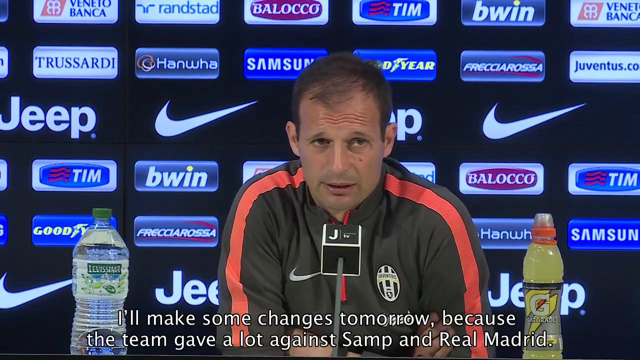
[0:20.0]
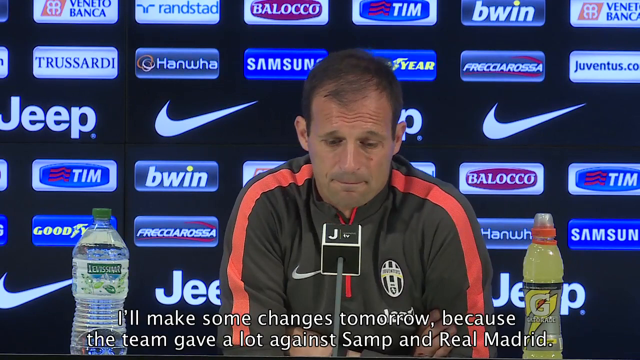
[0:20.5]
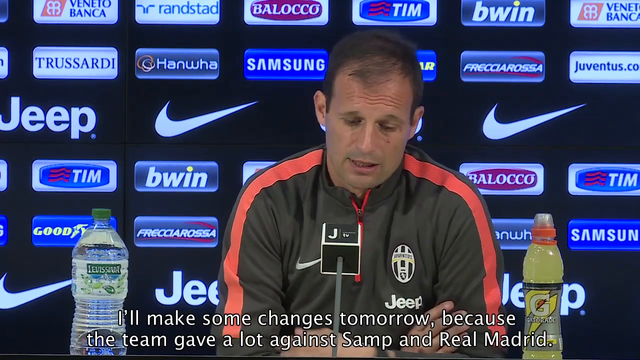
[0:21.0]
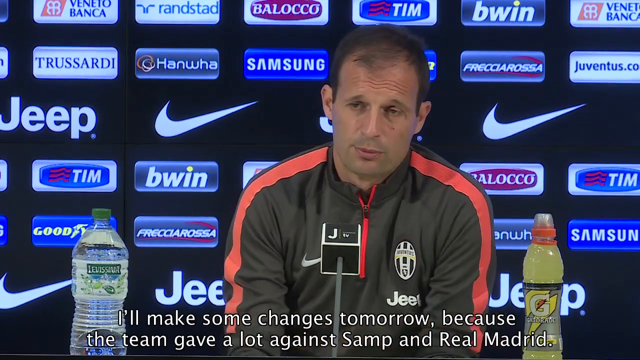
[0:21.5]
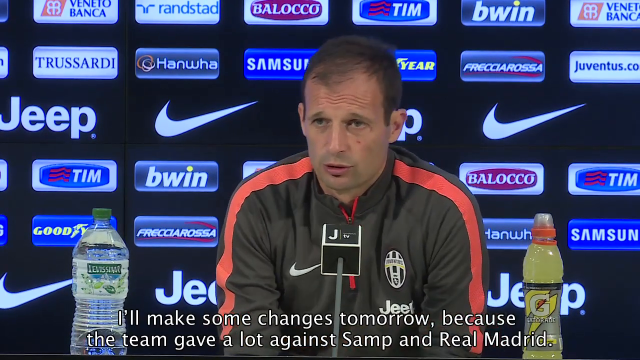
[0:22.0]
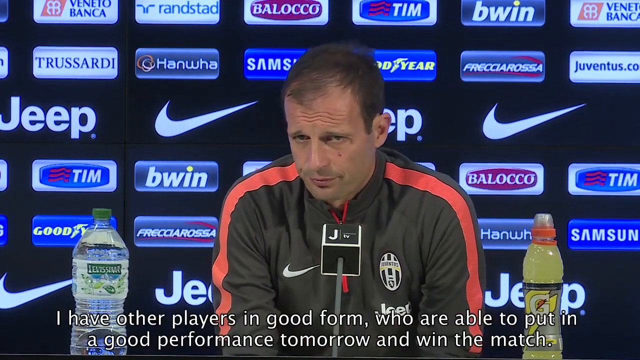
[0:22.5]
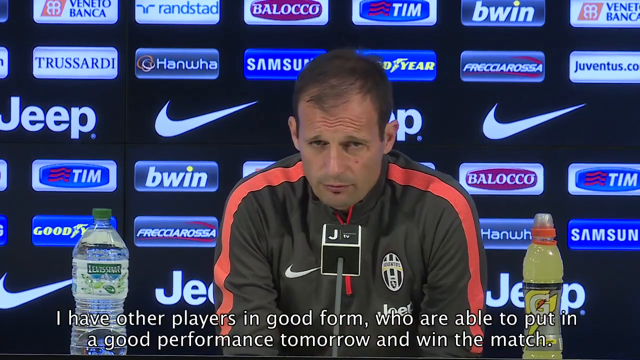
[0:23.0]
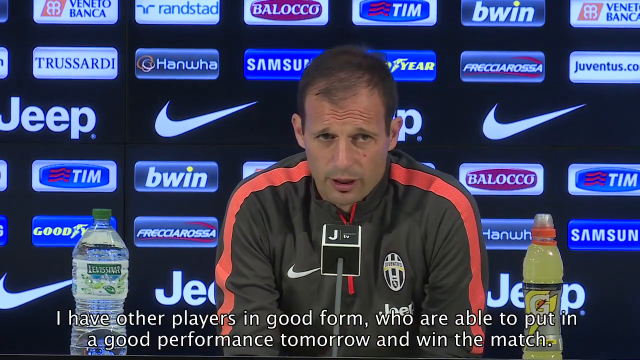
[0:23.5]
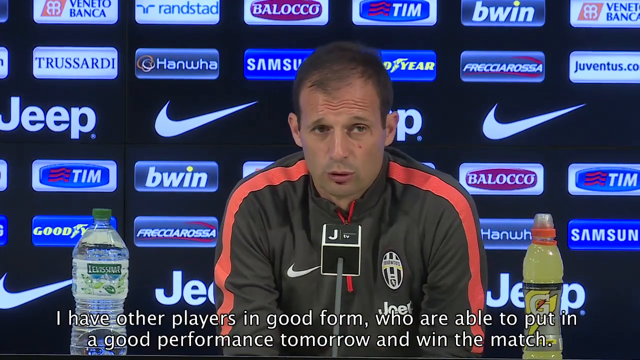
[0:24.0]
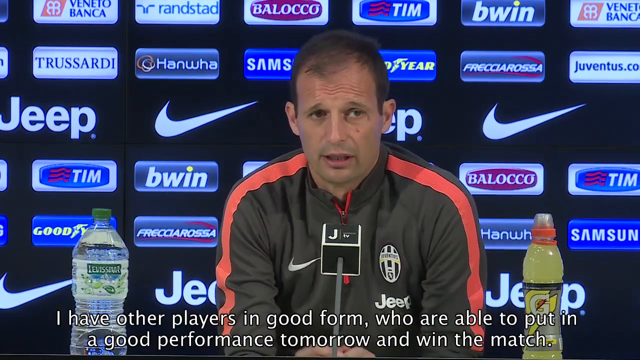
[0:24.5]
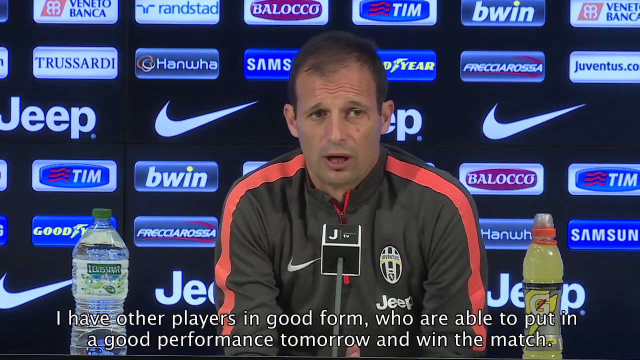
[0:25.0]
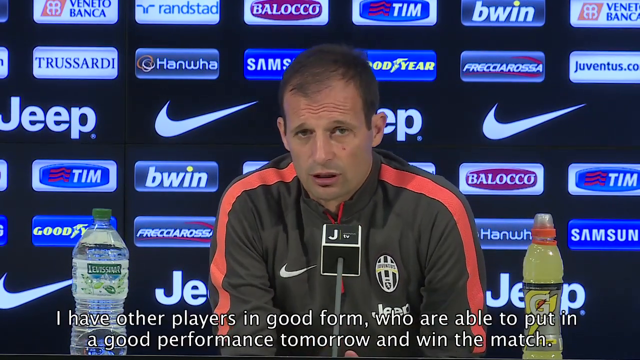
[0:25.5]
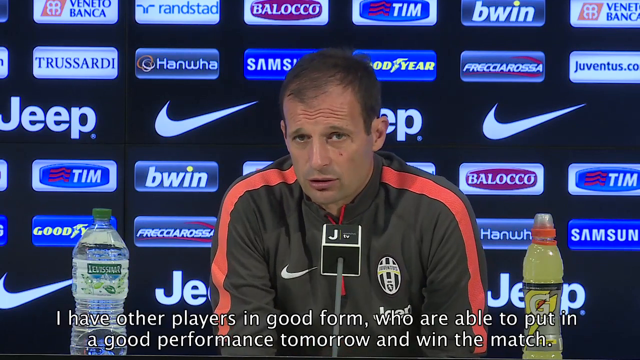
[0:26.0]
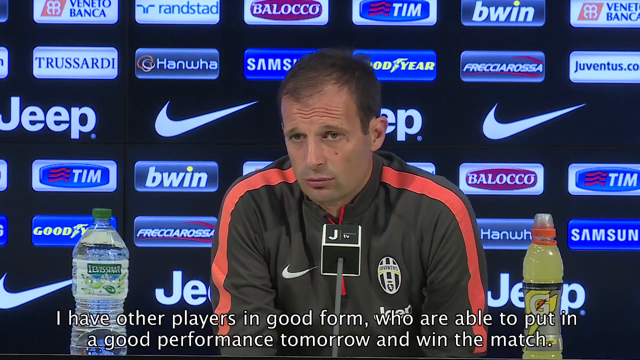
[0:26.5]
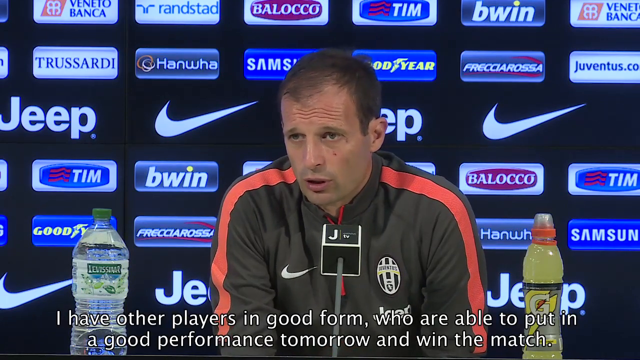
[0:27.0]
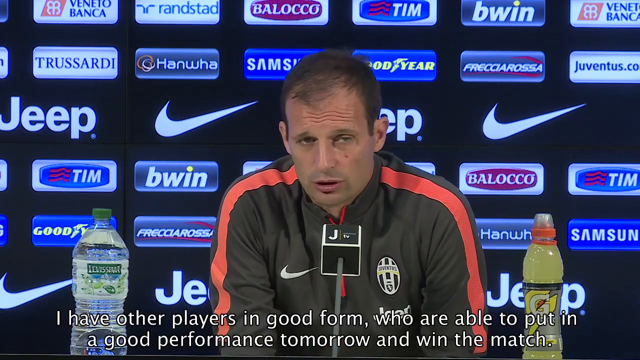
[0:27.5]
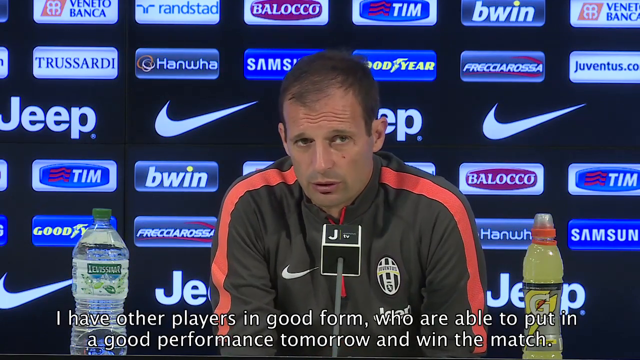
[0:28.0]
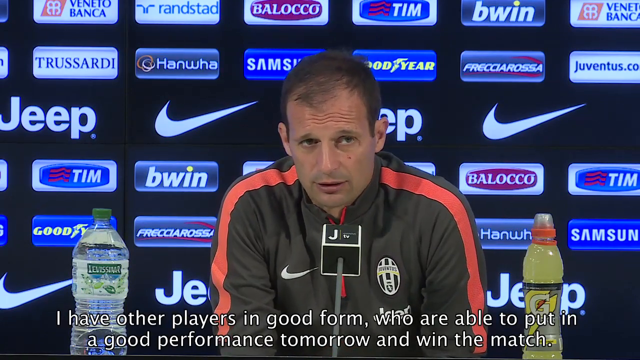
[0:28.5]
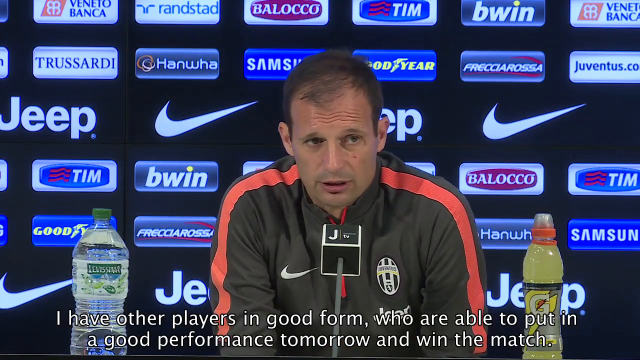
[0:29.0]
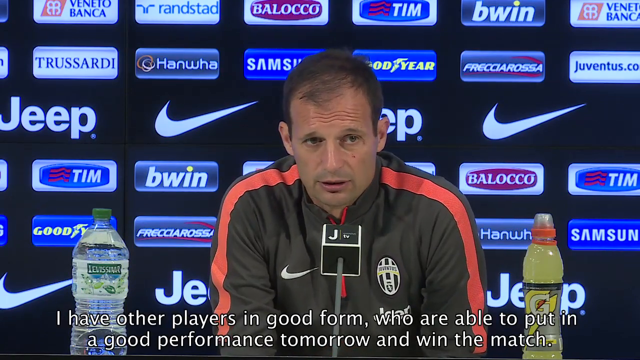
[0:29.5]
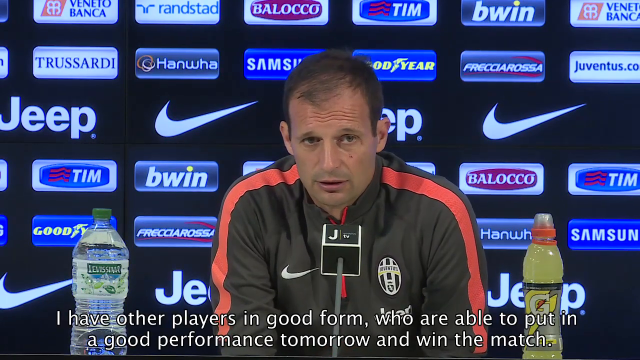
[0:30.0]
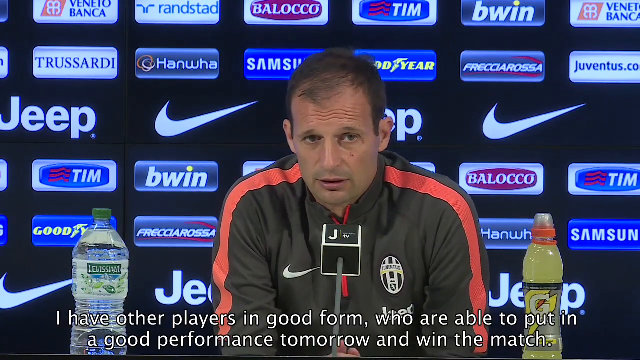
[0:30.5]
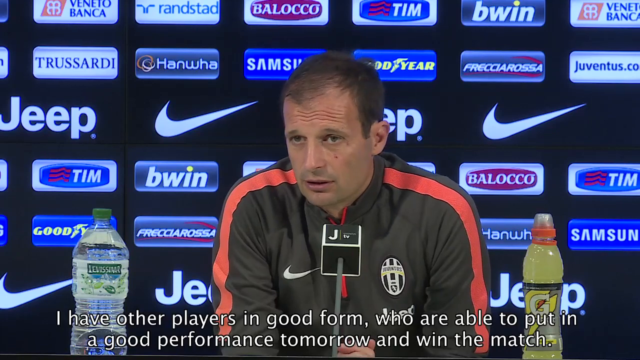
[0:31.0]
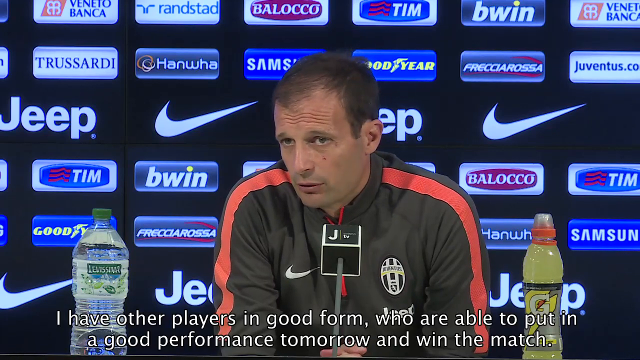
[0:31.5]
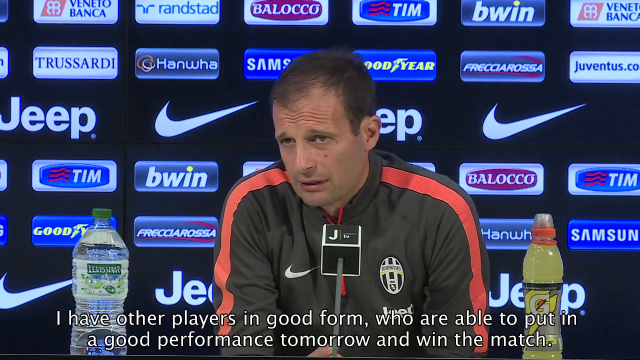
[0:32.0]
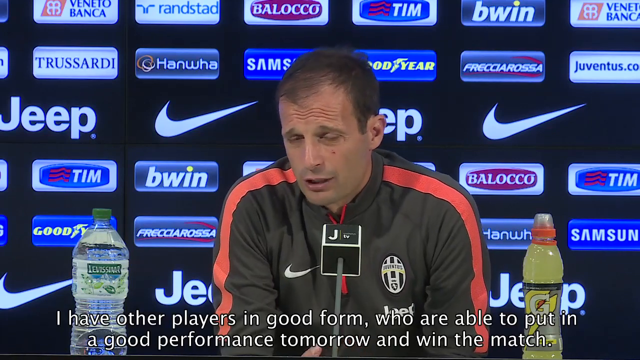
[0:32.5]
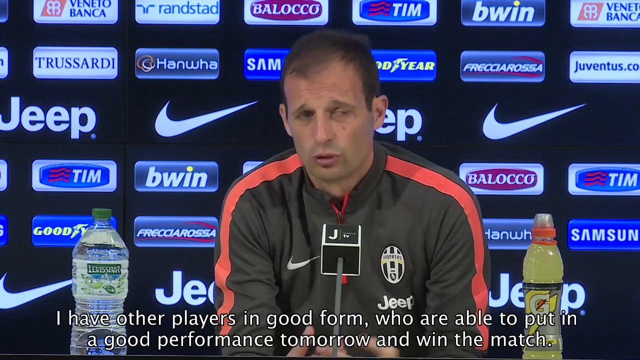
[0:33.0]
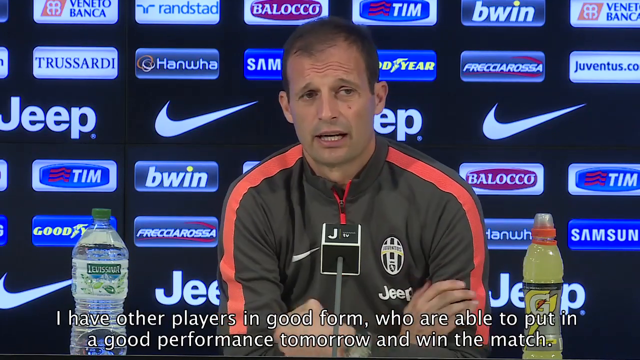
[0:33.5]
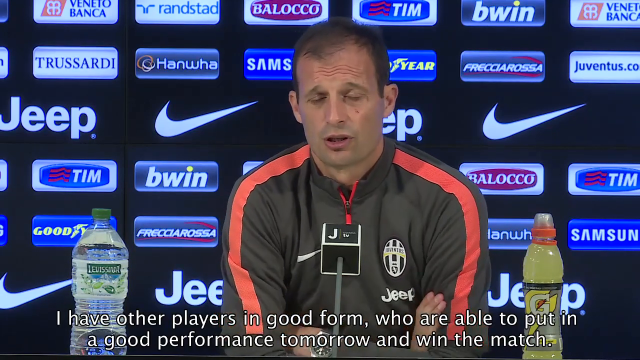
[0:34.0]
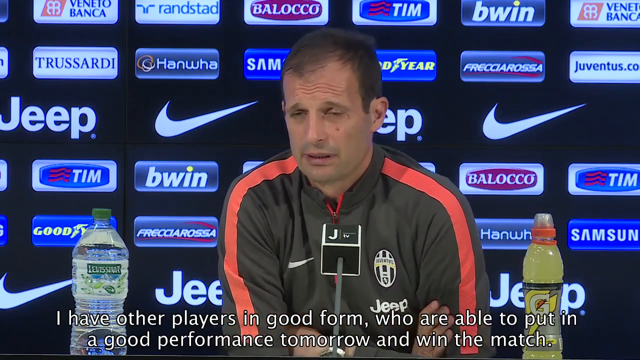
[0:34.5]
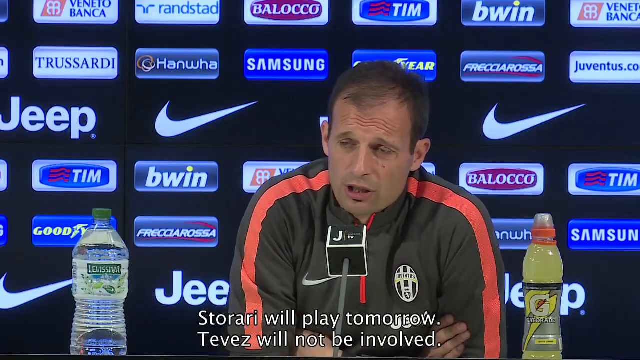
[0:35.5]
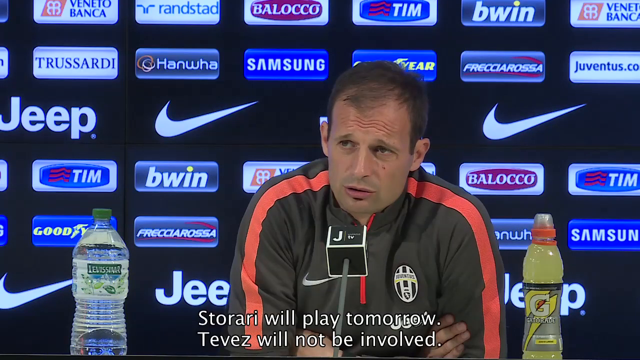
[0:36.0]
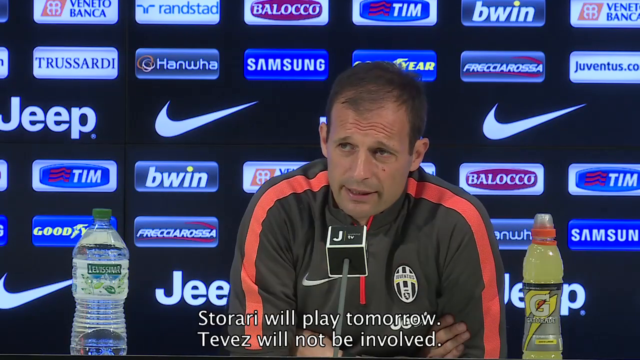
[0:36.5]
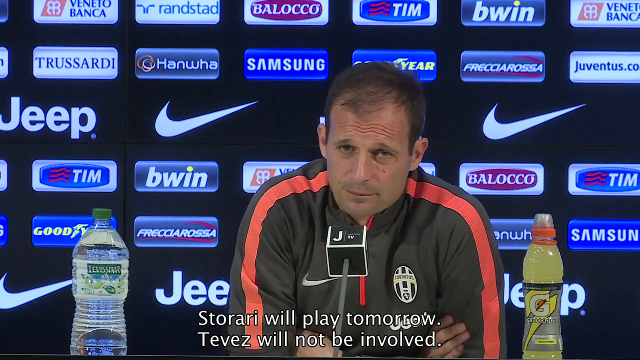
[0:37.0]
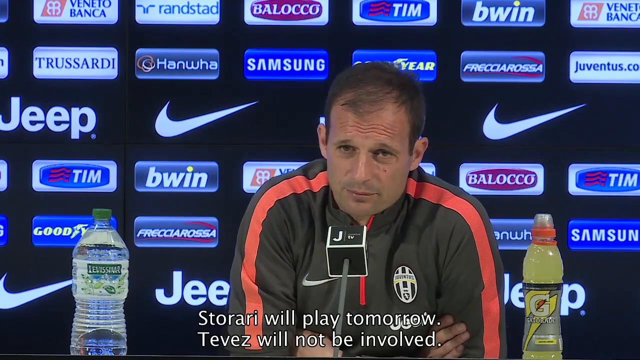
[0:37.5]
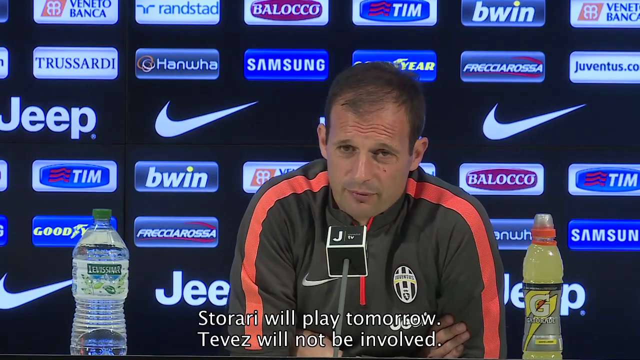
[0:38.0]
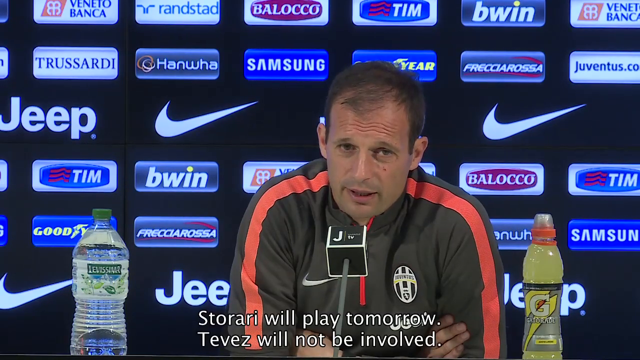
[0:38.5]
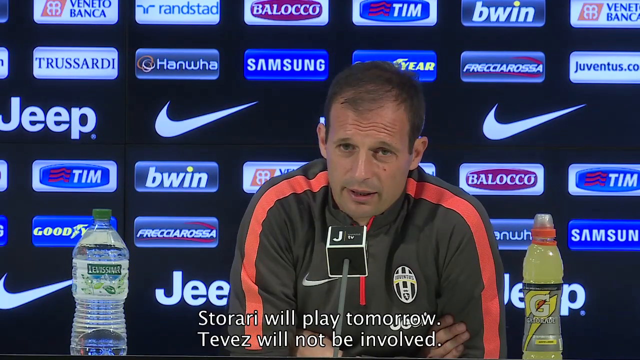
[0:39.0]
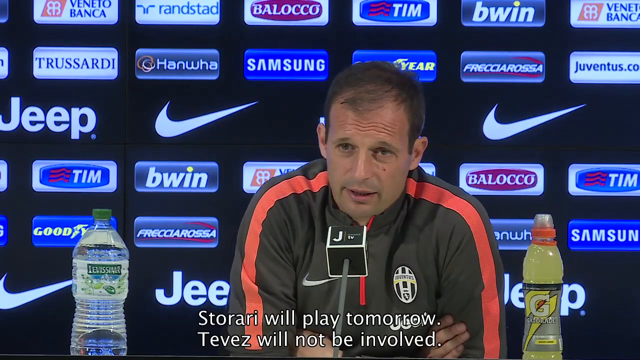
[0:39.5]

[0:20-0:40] The microphone in front of him is mounted on the surface of the counter behind which he is seated. It is a thin microphone stand topped, just before his mouth, by a square black box with a white outline on all its edges and the letter J visible on top; the microphone is either inside this box or is the box itself. To his right, on the viewer's left, is a large bottle of water with a green cap, and to his left, on the viewer's right, is a bottle of what looks like juice, a light yellow substance. He says, "I have other players in good form who are able to put in a good performance tomorrow and win the match." He looks like the coach of the team. The subtitles read: "Storari will play tomorrow. Tavares will not be involved."